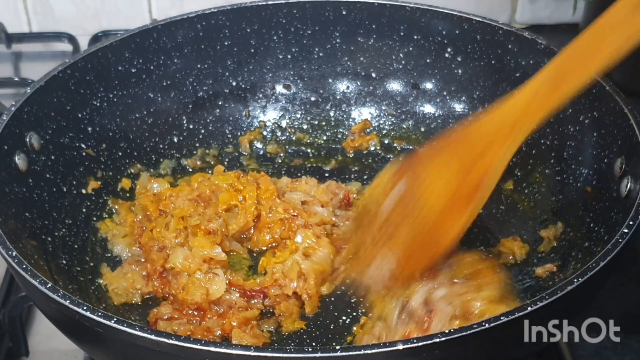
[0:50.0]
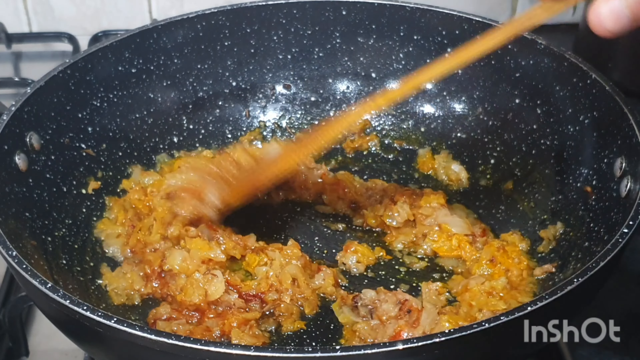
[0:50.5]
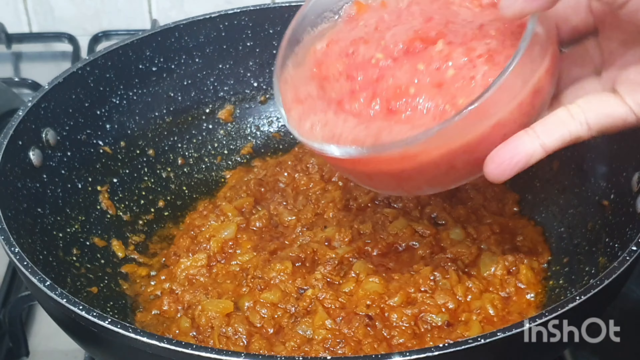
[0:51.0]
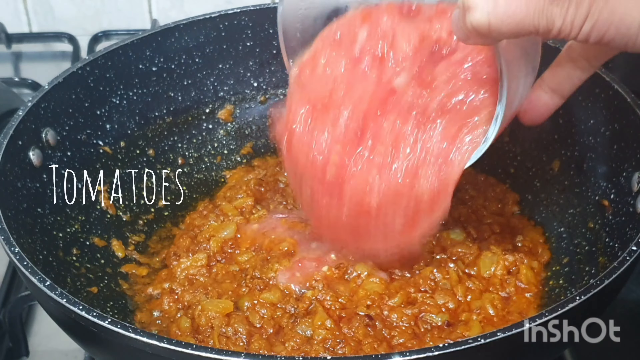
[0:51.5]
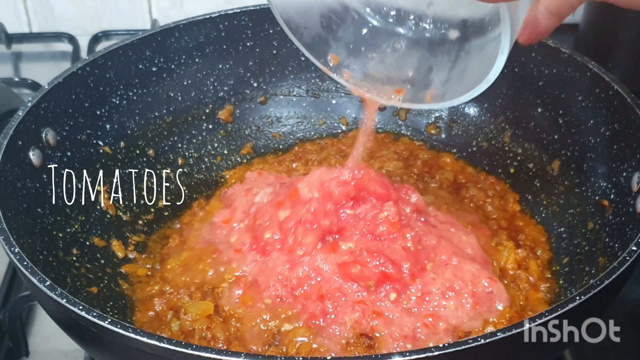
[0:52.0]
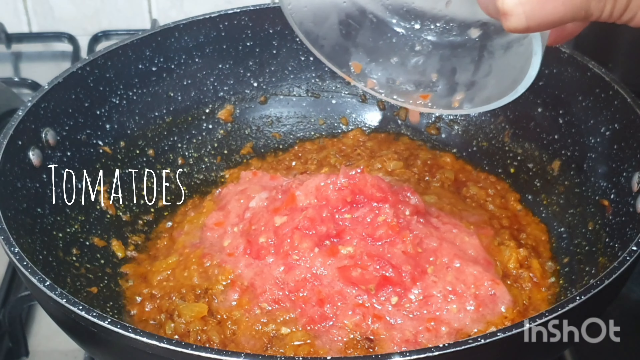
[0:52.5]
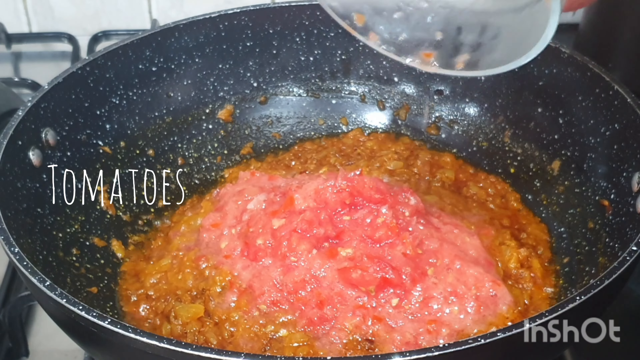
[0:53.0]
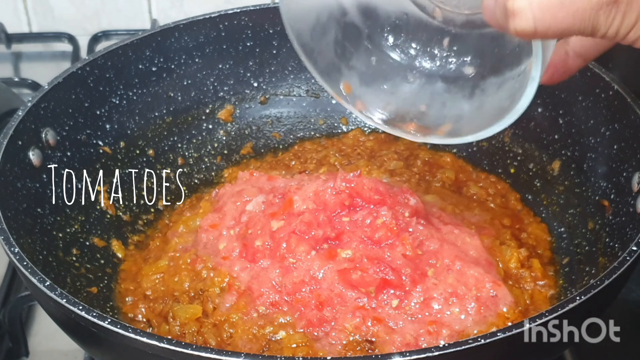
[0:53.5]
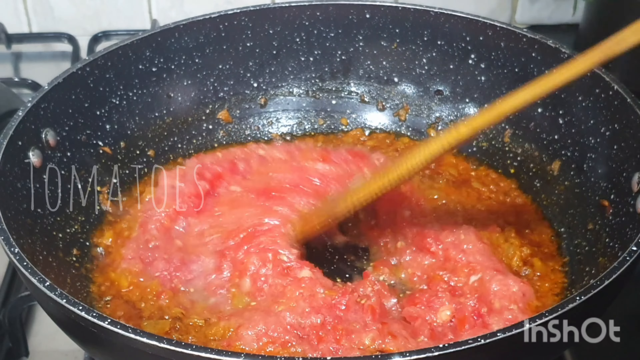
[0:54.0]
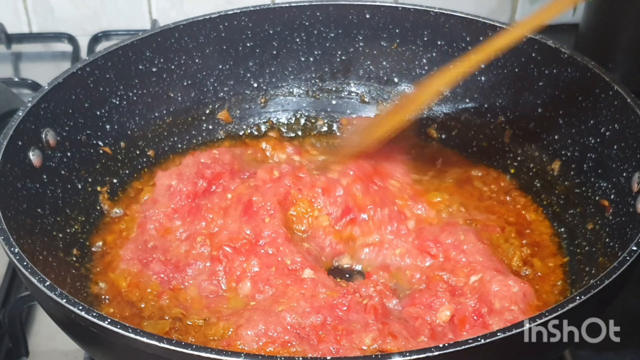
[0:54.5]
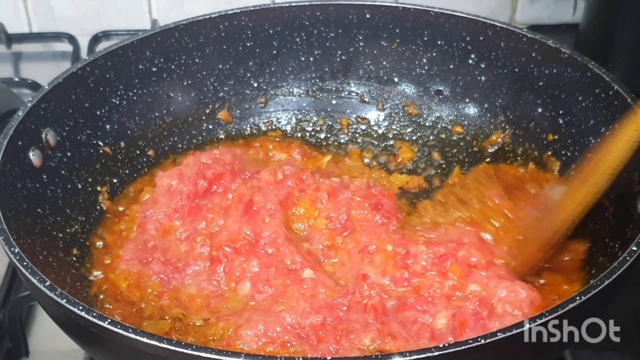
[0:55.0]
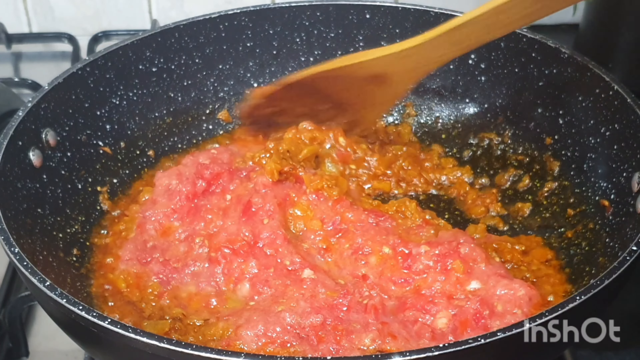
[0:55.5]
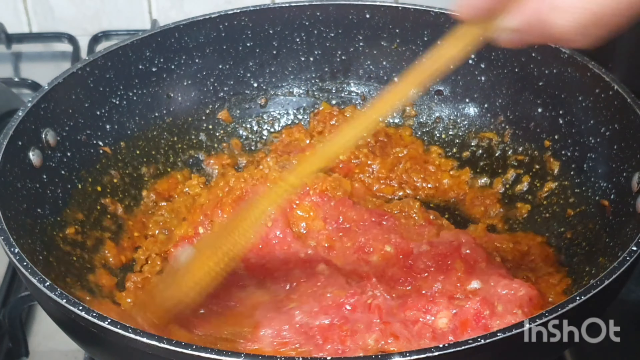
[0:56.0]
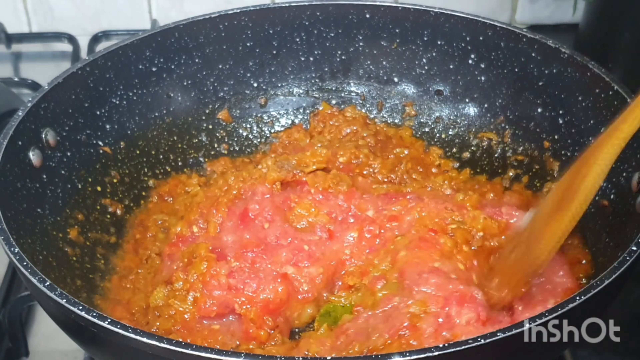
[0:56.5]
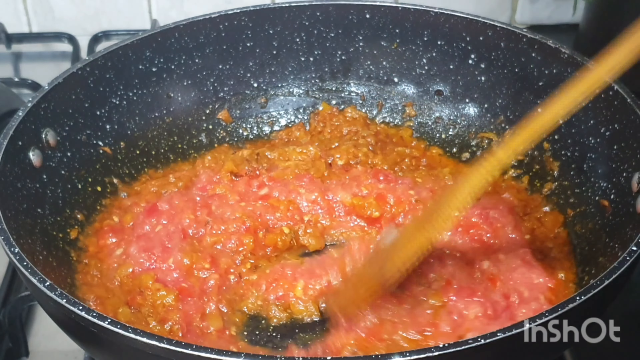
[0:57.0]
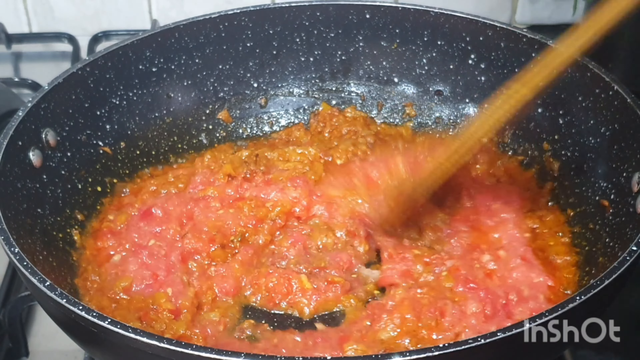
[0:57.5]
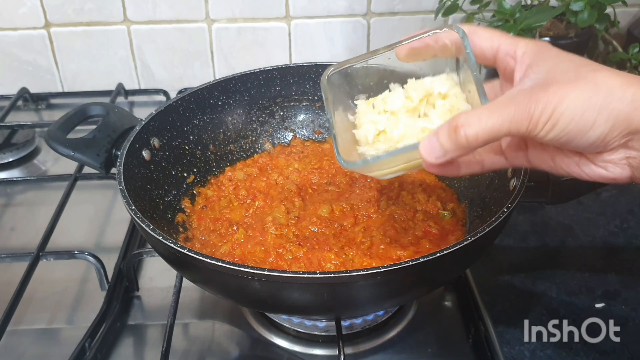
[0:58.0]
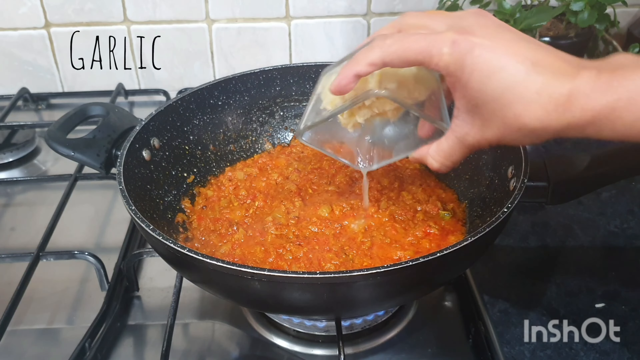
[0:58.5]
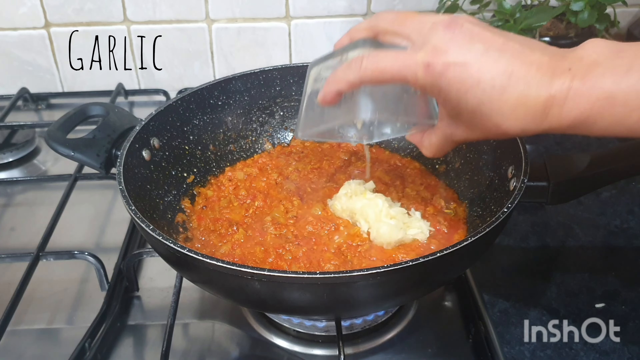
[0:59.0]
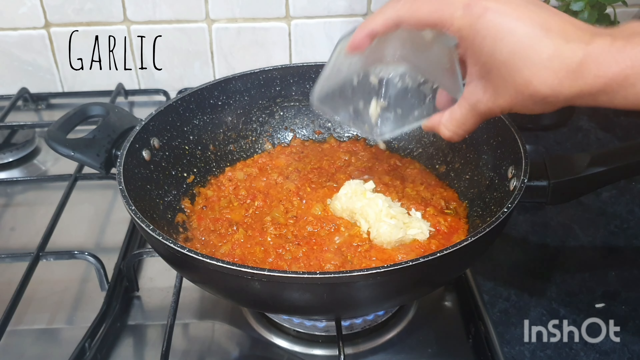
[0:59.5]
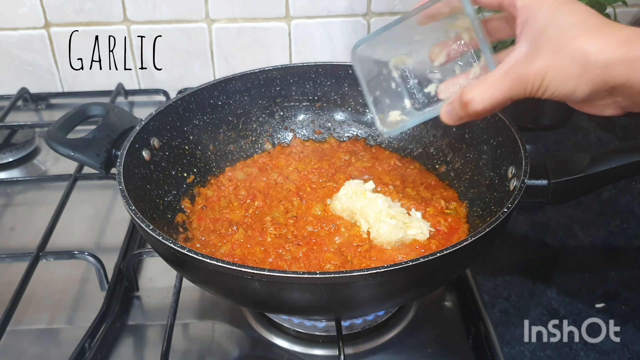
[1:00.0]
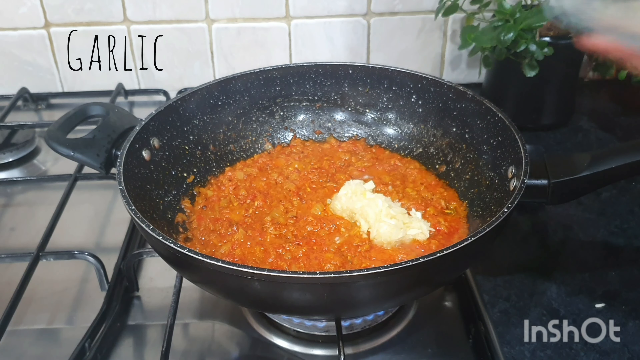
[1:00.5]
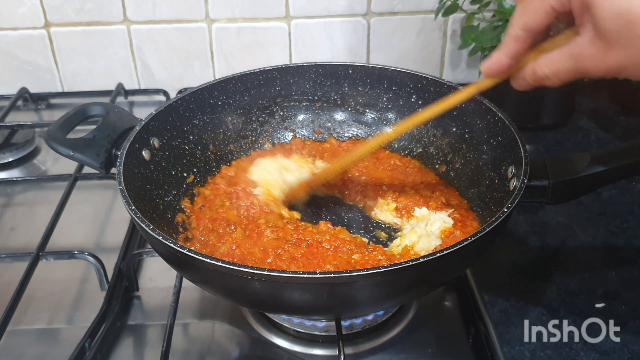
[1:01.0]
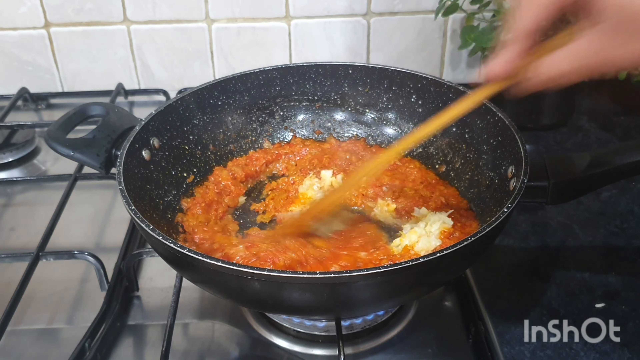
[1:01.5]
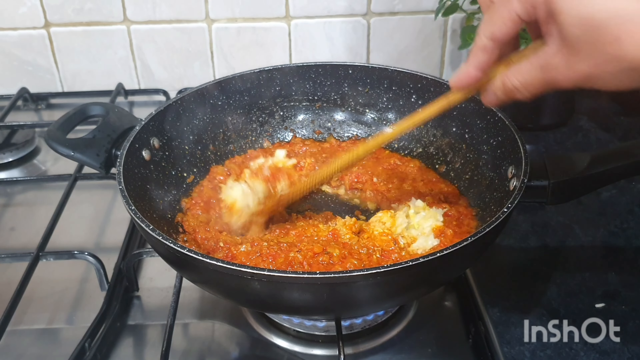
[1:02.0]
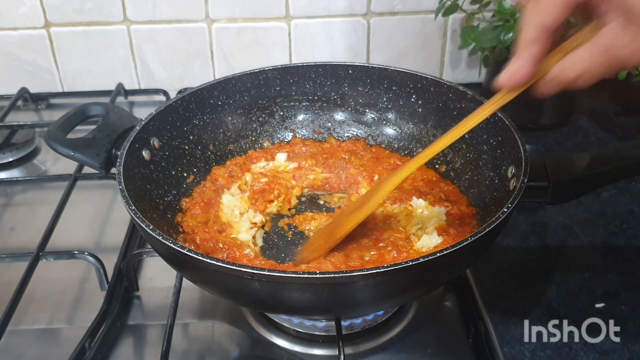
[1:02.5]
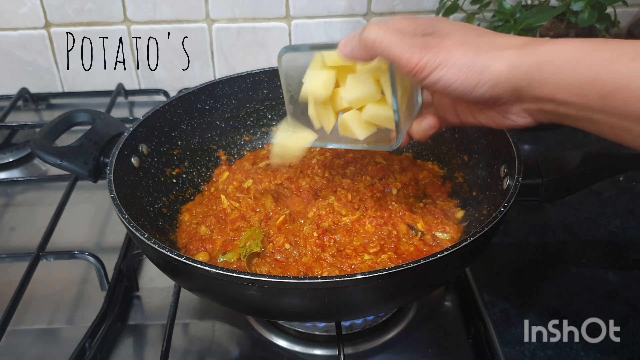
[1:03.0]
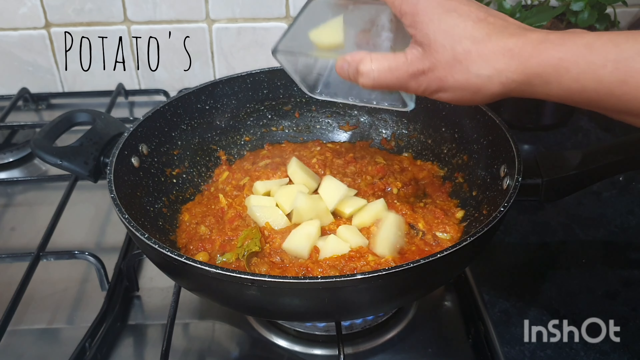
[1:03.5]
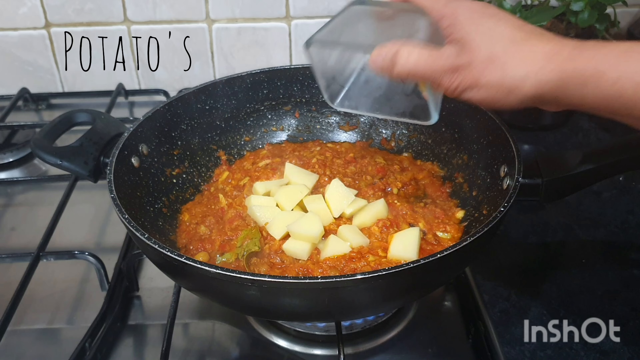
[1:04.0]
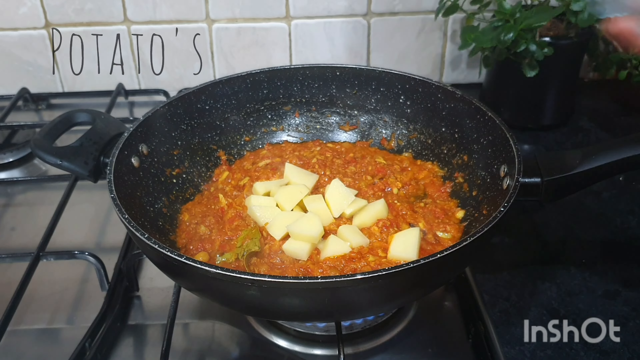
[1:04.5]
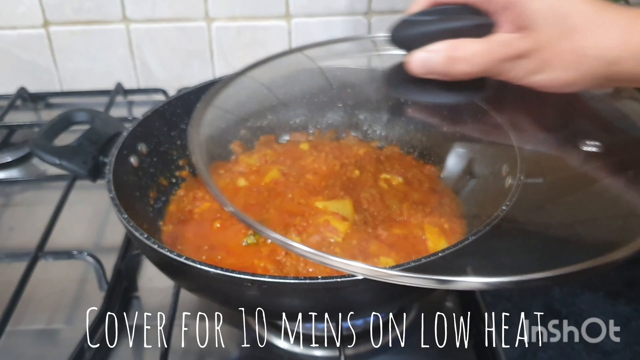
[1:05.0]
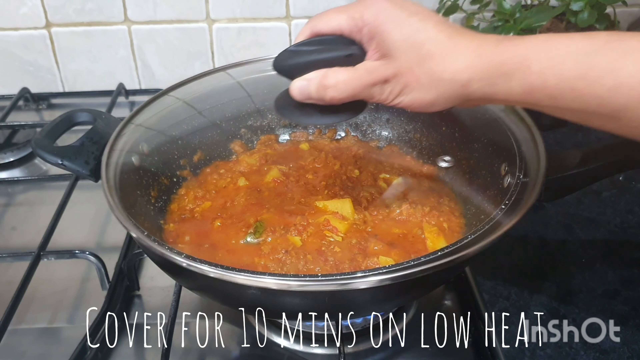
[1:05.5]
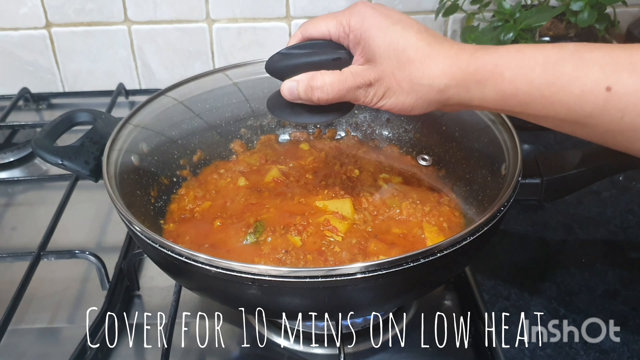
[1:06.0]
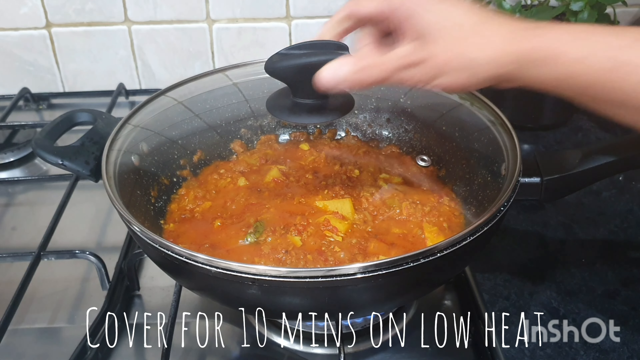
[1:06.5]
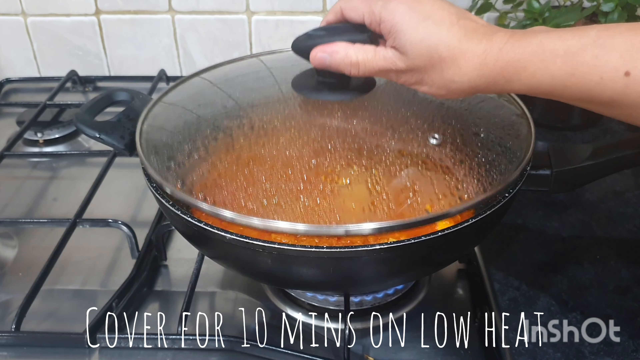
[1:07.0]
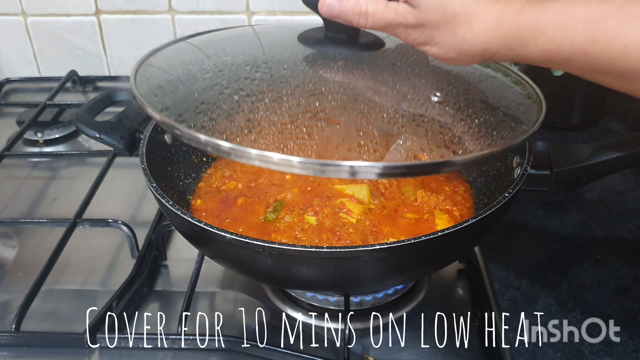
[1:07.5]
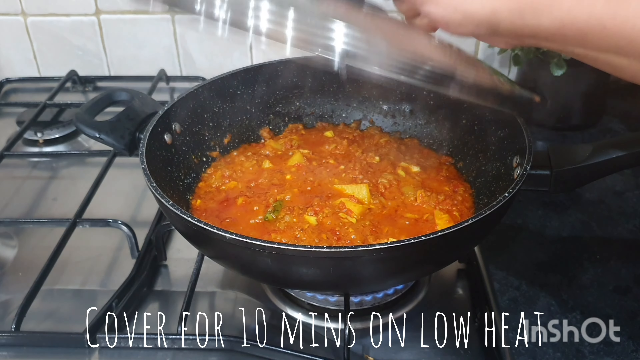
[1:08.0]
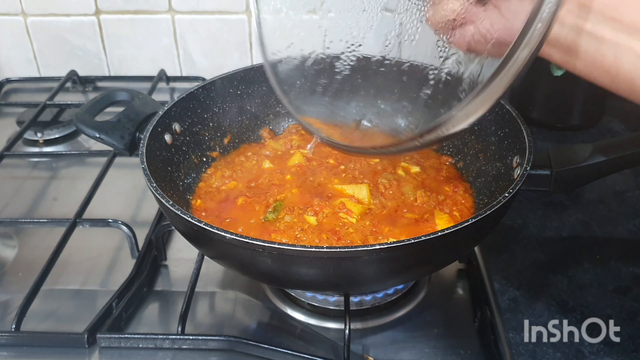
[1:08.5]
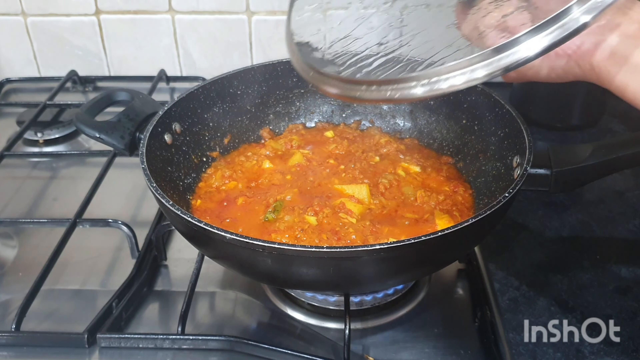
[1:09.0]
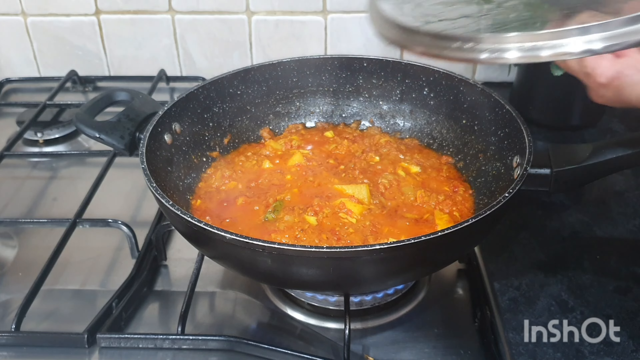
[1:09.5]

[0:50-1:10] Everything in the pan is stirred well with a wooden spoon. Tomatoes are added, apparently homemade tomato pulp made from chopped, skinned tomatoes, and stirred in so that everything is still quite liquid. Minced garlic follows, and then potatoes. A list of everything being put in is displayed by the pan. The view is focused on the pan, with very little background shown. After the potatoes are added, the lid is put on.